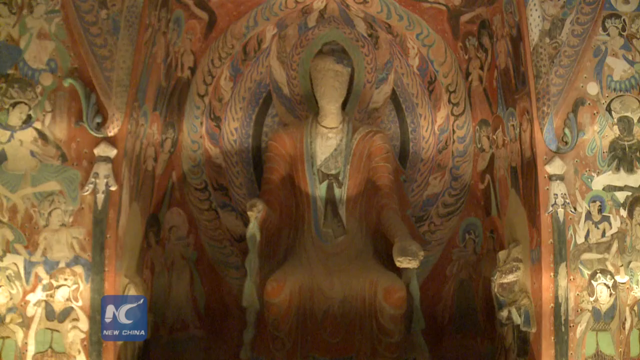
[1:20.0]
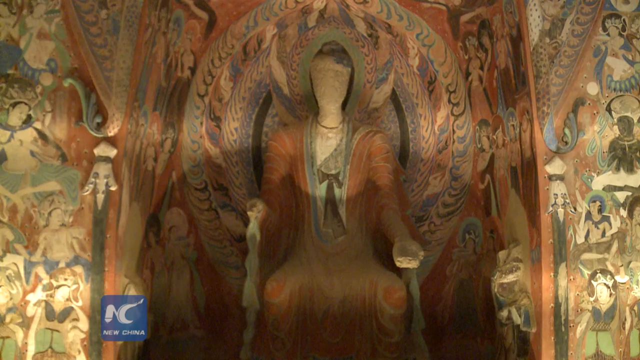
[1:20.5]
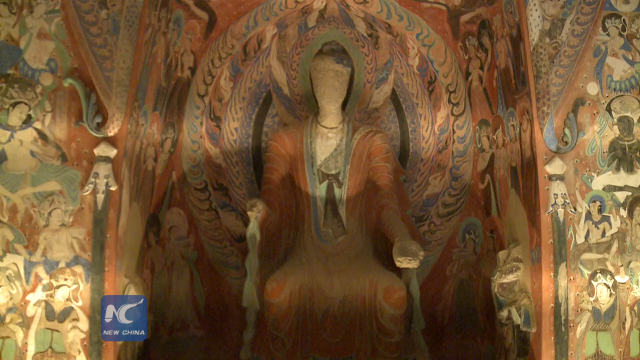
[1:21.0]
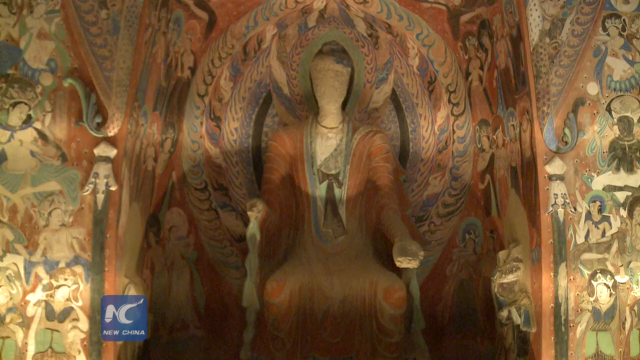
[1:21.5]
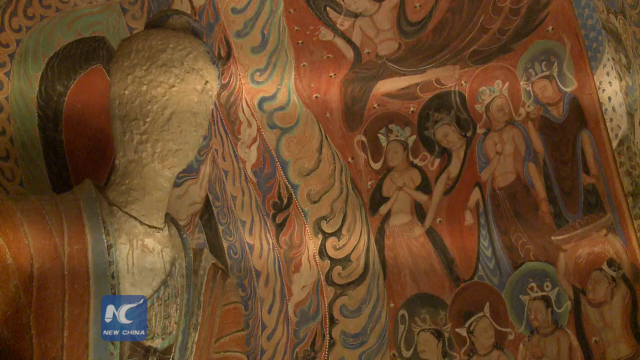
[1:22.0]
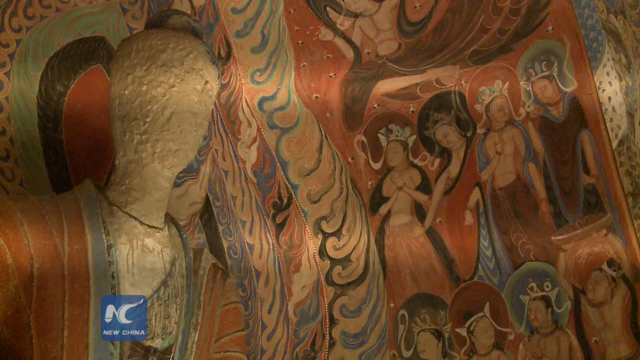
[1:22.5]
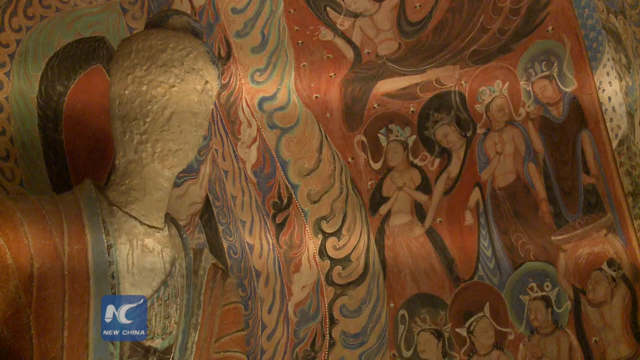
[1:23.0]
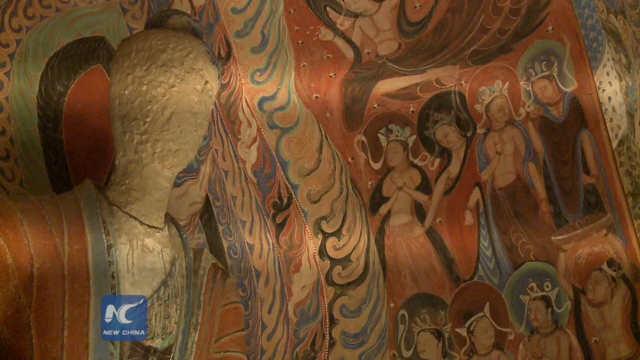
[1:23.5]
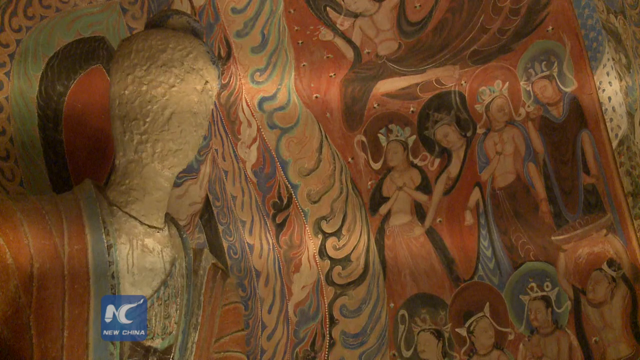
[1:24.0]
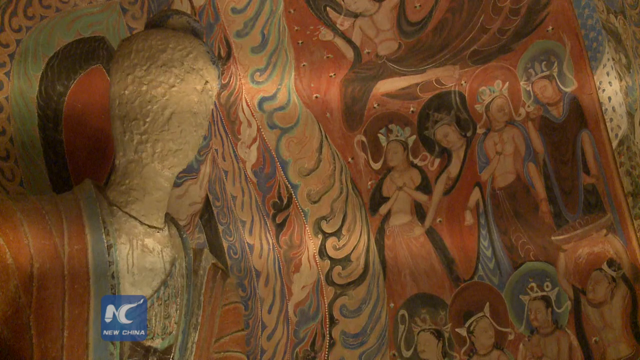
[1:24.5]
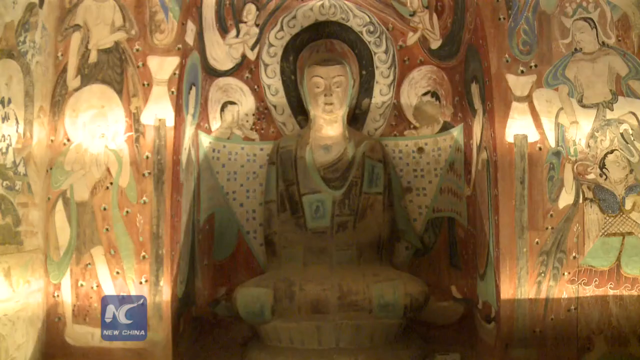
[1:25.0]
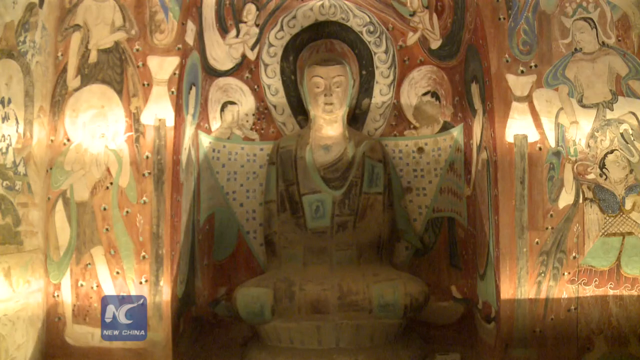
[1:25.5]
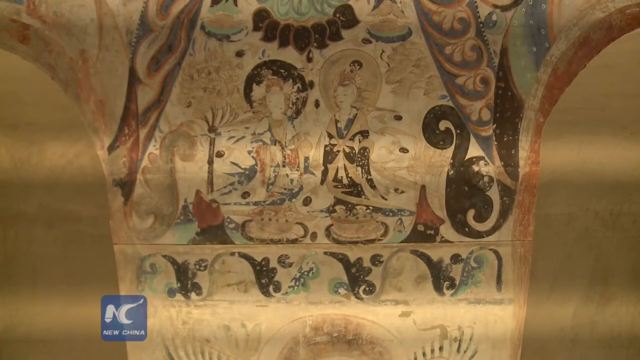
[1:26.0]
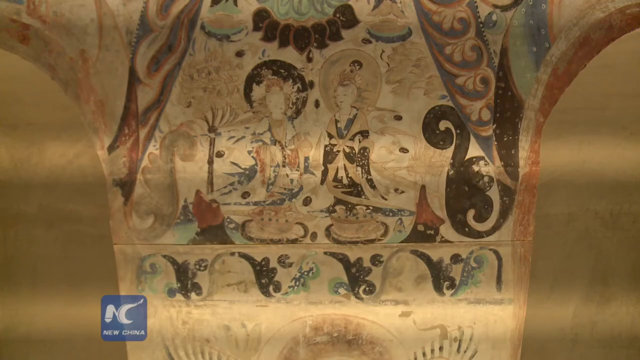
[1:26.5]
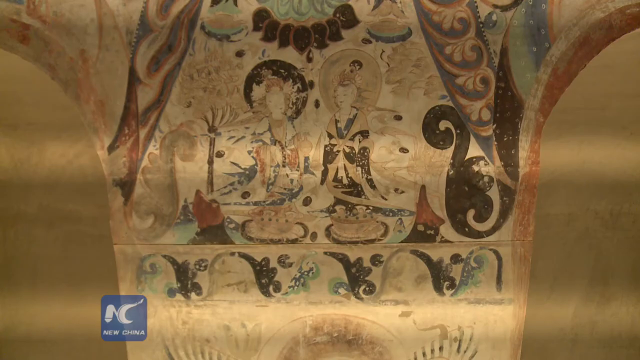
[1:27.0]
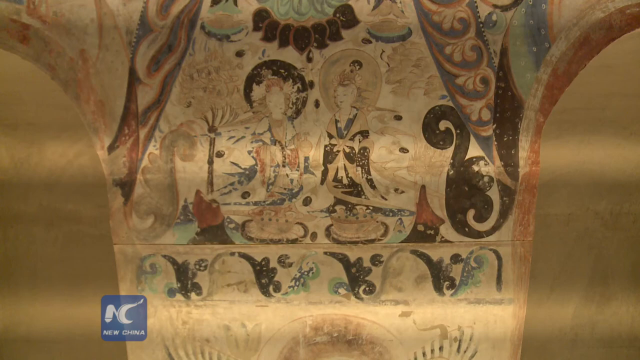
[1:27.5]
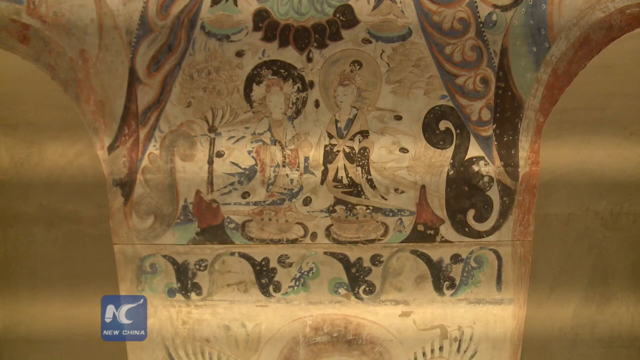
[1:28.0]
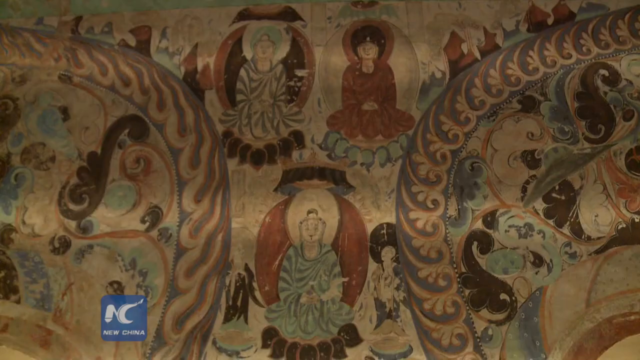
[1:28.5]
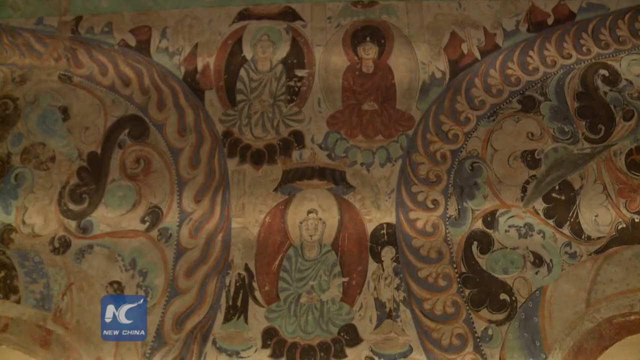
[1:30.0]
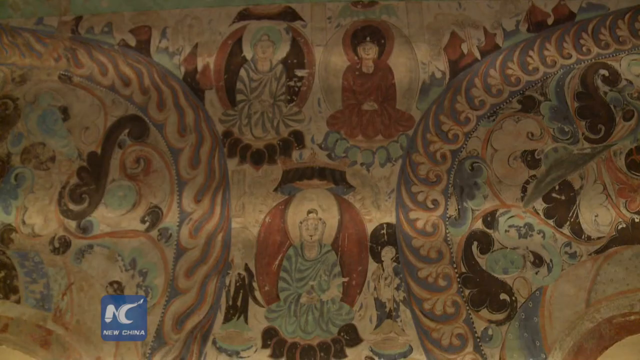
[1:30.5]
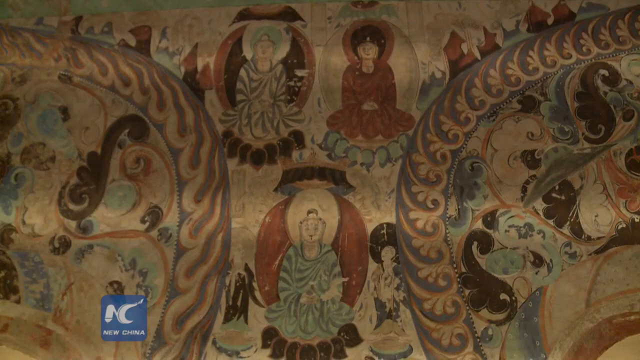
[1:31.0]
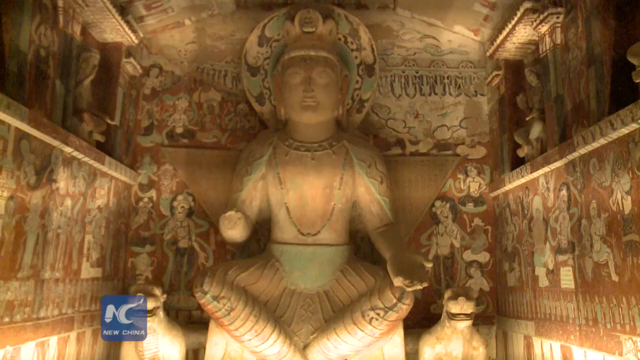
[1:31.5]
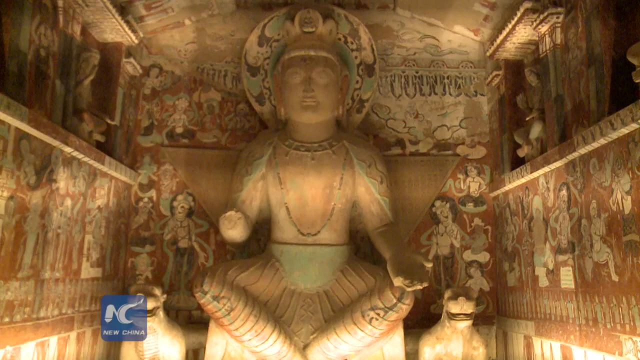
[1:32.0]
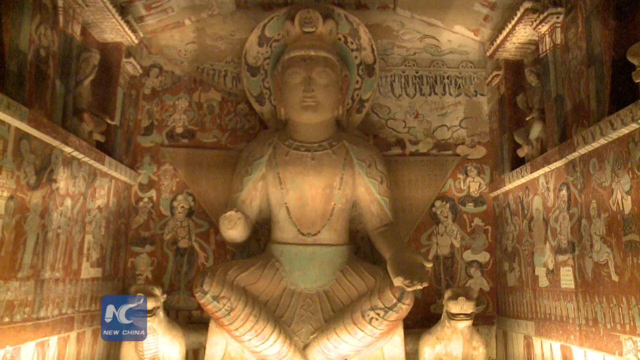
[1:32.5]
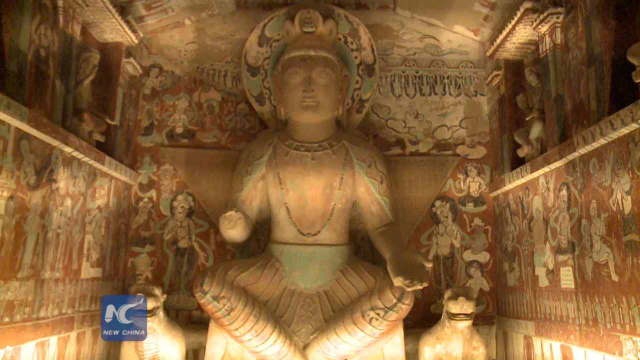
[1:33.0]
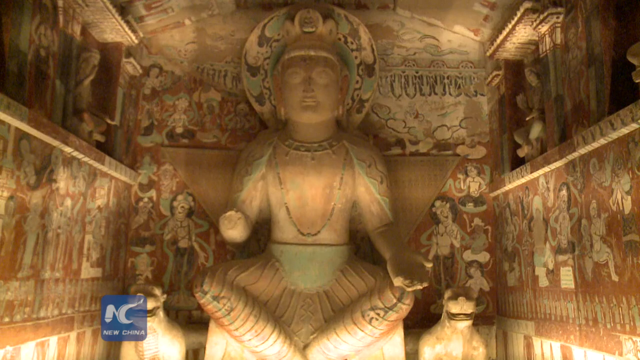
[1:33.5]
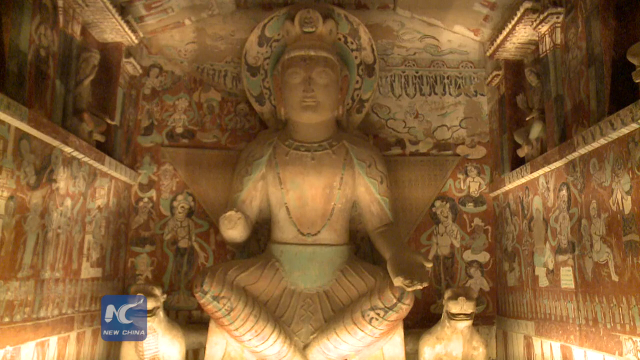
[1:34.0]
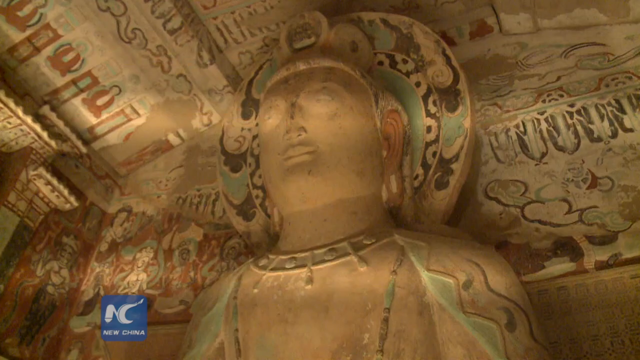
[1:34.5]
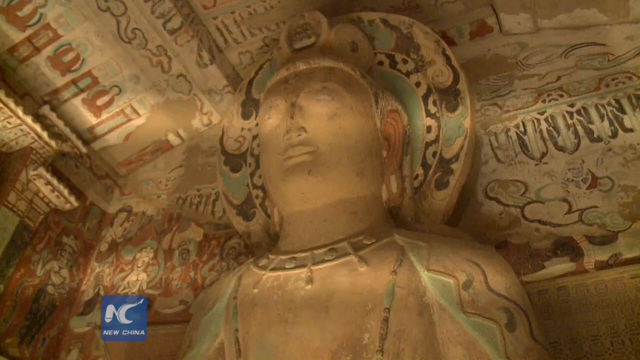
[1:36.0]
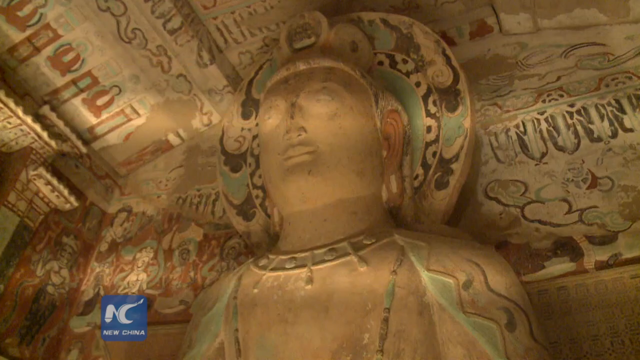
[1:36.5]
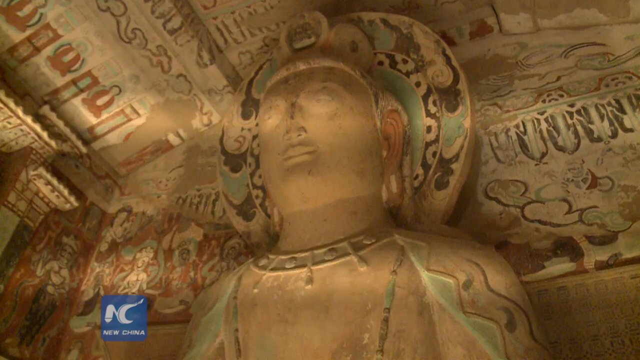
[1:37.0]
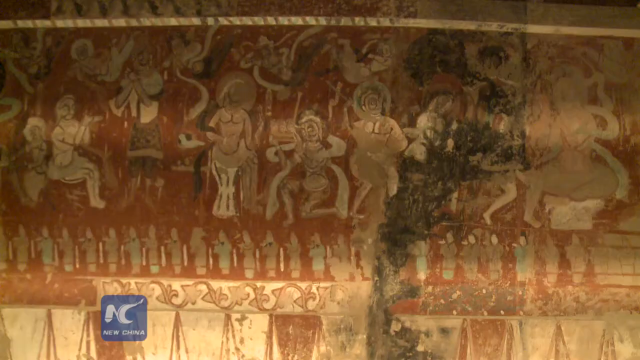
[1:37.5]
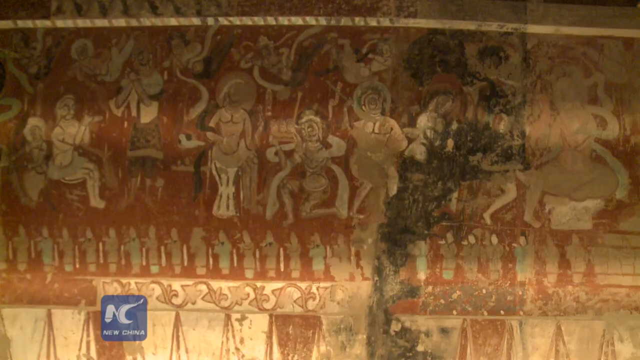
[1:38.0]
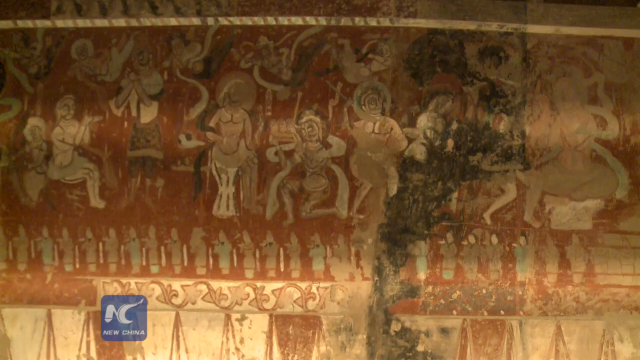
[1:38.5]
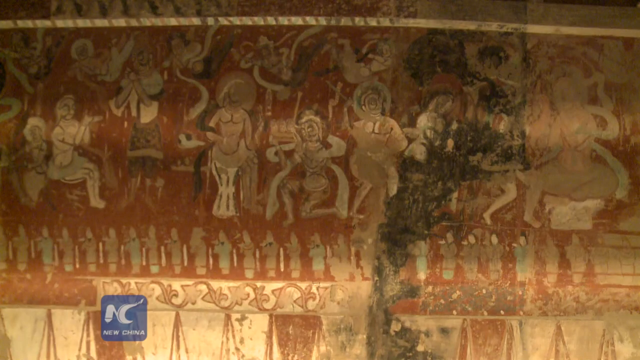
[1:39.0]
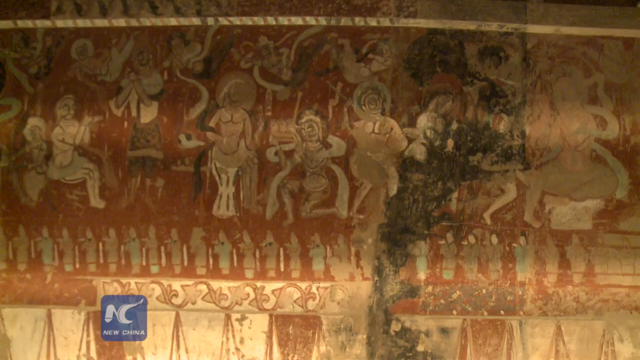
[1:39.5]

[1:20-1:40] A sculpture, not a painting, is shown; it almost looks like papier-mâché and appears very fragile. It depicts a person sticking out one hand while the other hand holds something, and it has visible wear and tear, maybe because of its age. A different shot shows the pale face, which has no facial details; it is only recognisably human-like. More sculptures and paintings follow, including a very big Buddhist sculpture at least two or three times the size of a normal person, very wide and covering the entire wall of its room, with more iconography around it. The video continues through different parts of the museum.